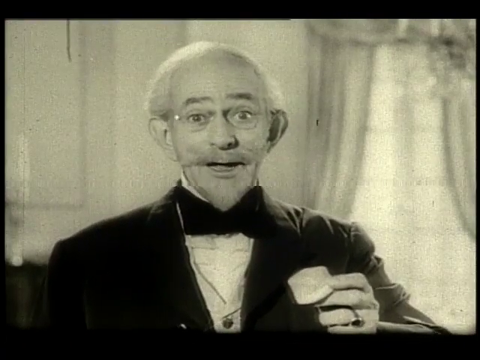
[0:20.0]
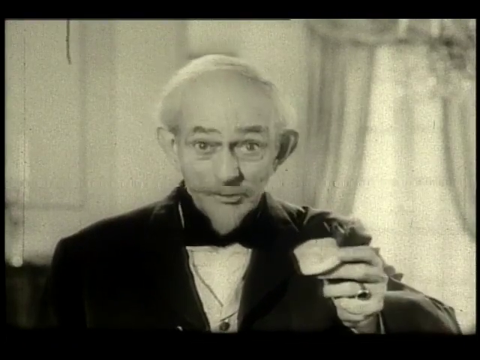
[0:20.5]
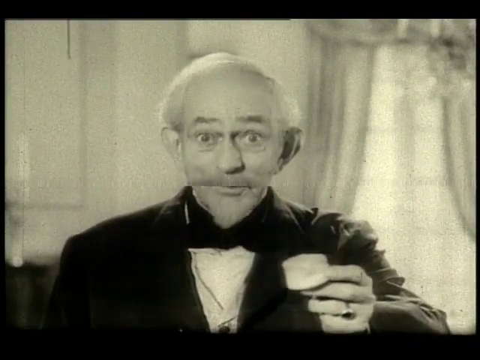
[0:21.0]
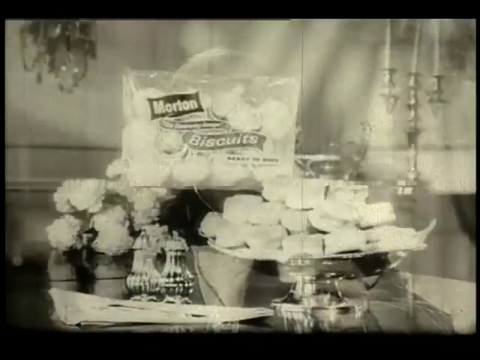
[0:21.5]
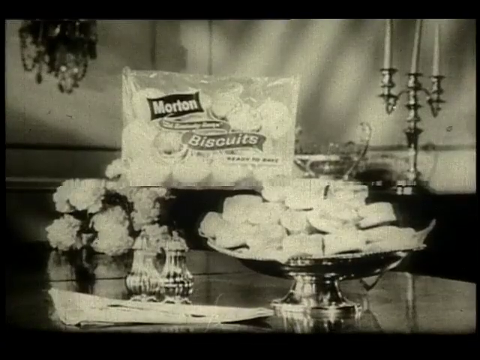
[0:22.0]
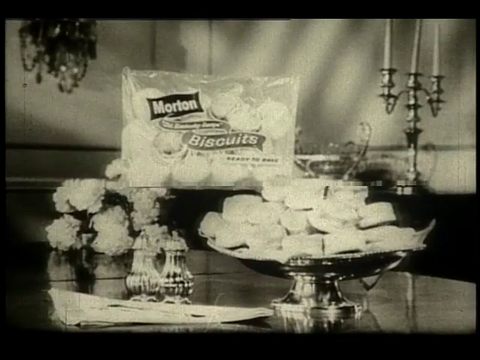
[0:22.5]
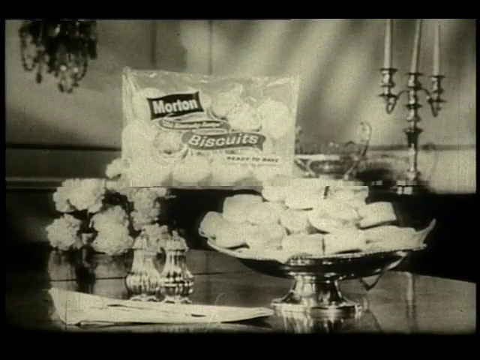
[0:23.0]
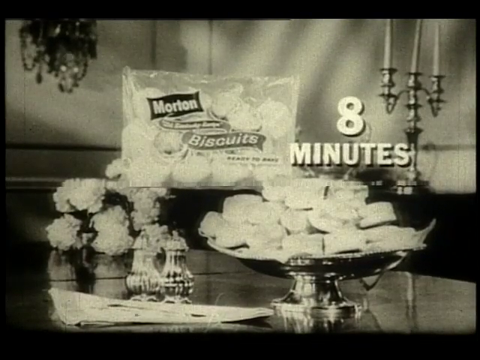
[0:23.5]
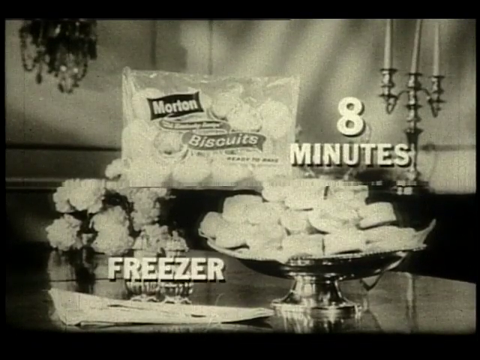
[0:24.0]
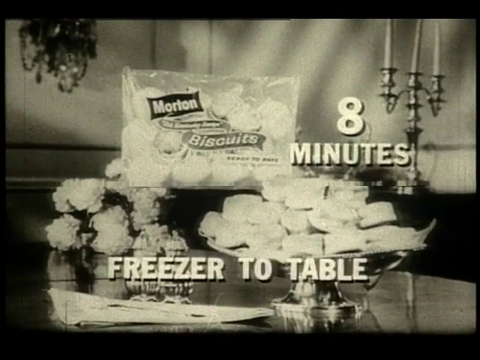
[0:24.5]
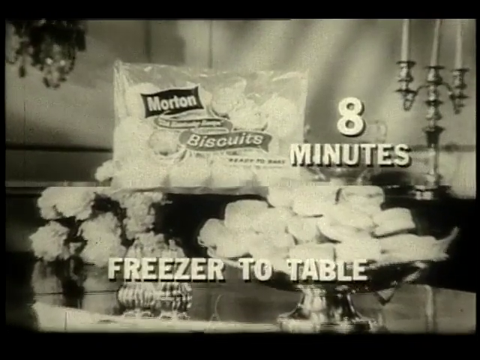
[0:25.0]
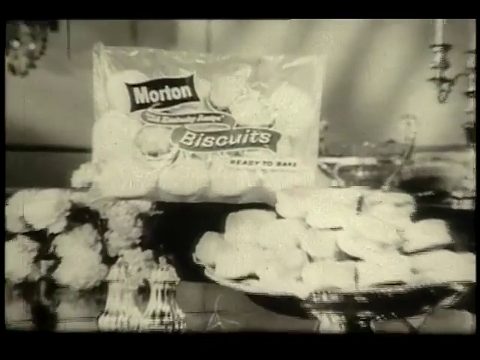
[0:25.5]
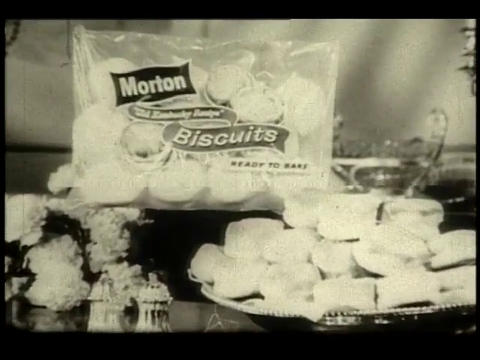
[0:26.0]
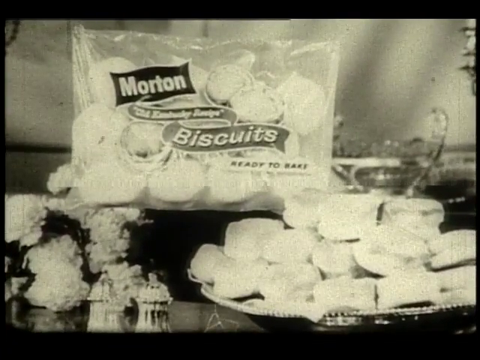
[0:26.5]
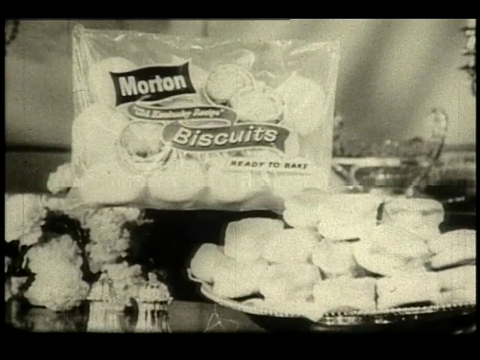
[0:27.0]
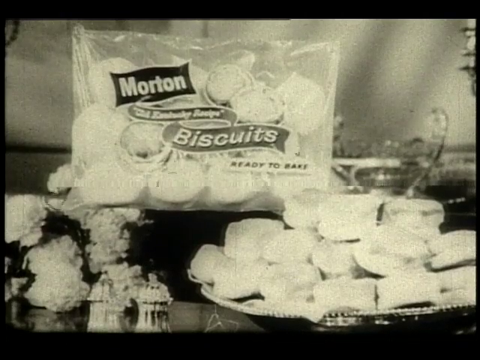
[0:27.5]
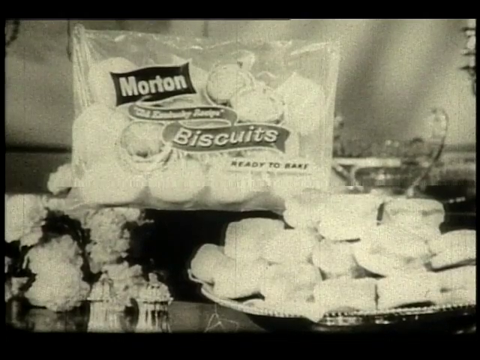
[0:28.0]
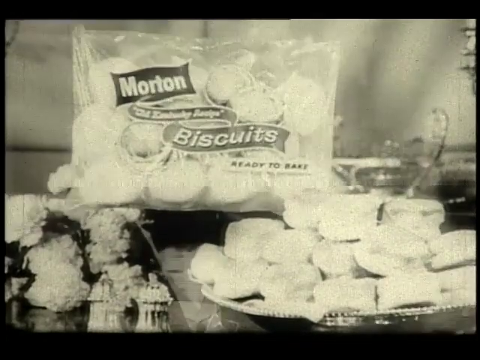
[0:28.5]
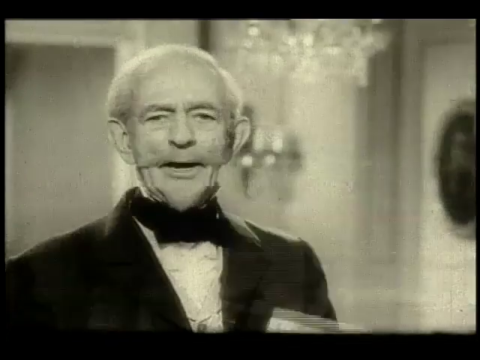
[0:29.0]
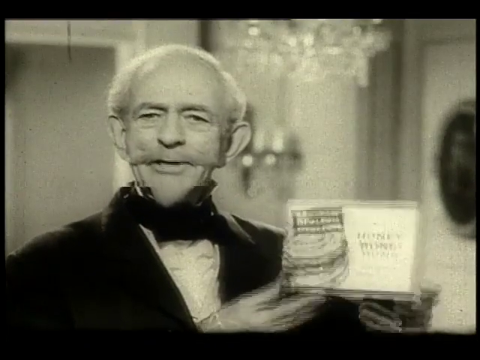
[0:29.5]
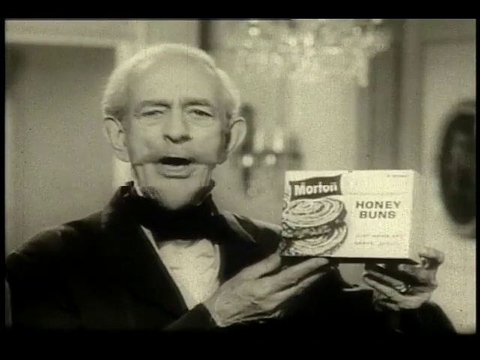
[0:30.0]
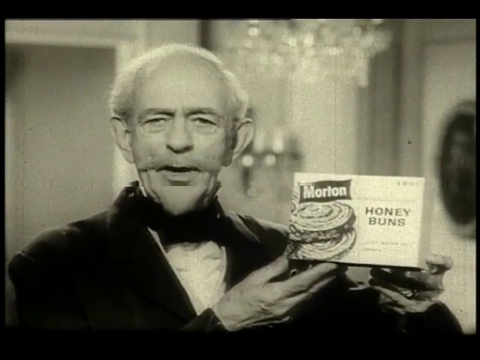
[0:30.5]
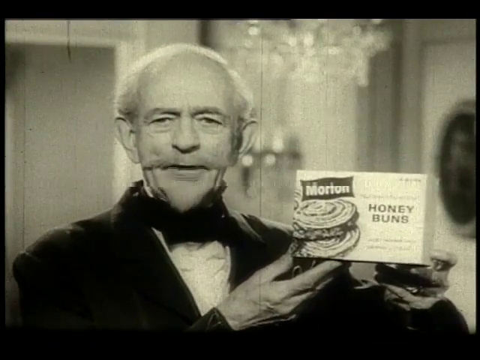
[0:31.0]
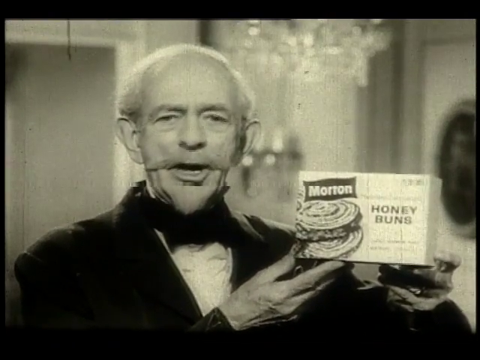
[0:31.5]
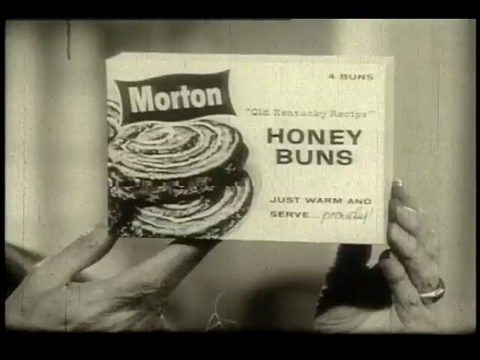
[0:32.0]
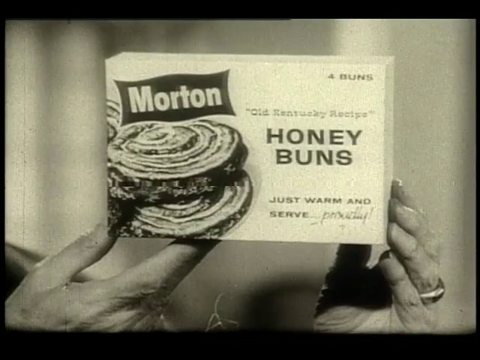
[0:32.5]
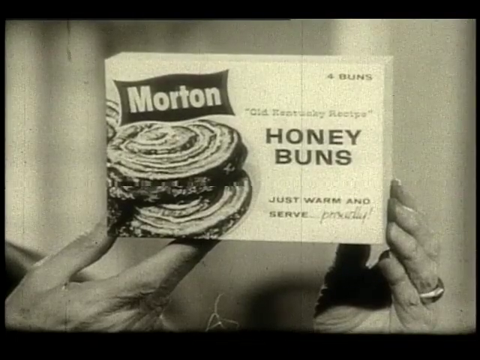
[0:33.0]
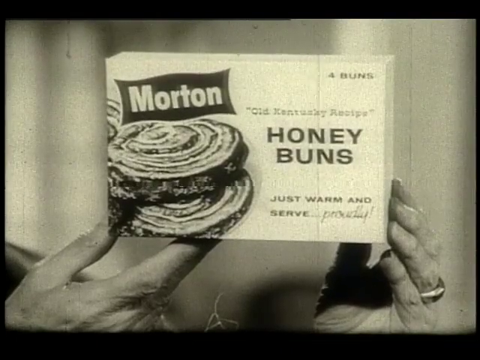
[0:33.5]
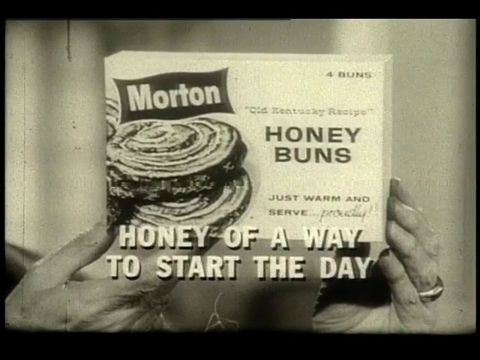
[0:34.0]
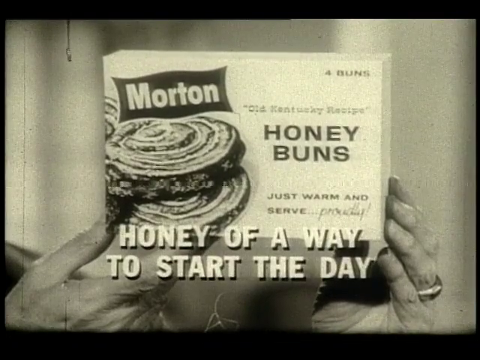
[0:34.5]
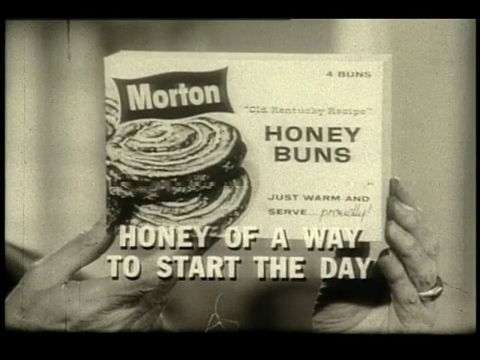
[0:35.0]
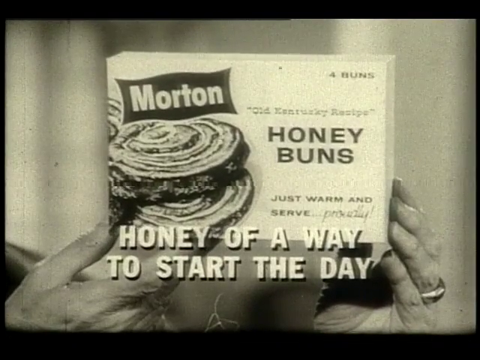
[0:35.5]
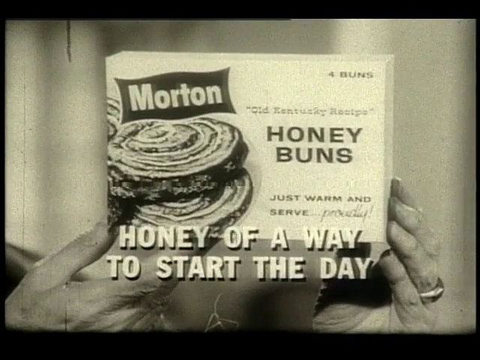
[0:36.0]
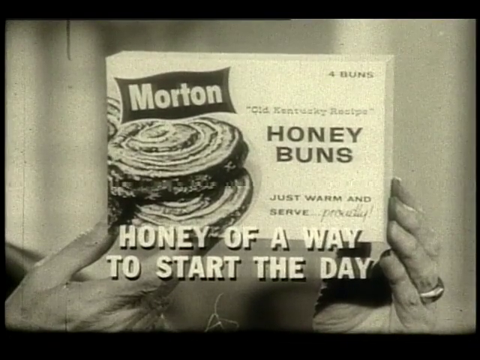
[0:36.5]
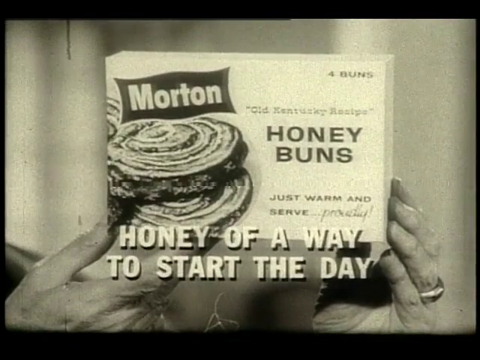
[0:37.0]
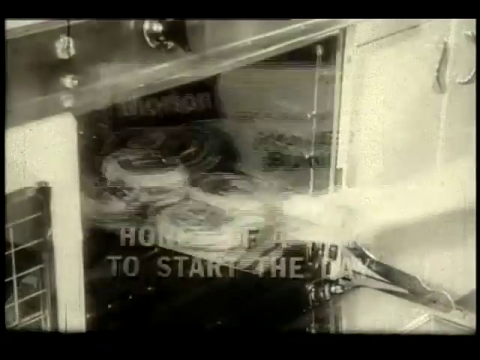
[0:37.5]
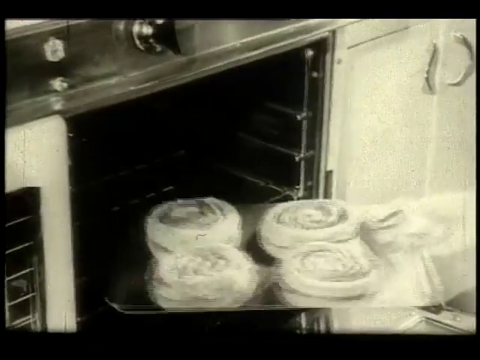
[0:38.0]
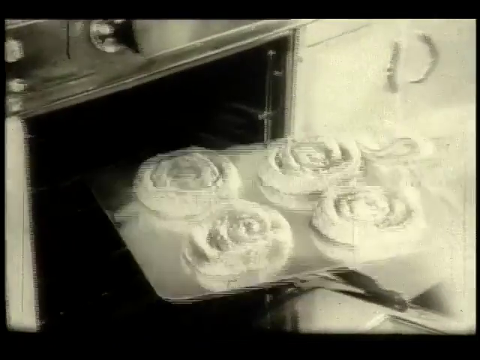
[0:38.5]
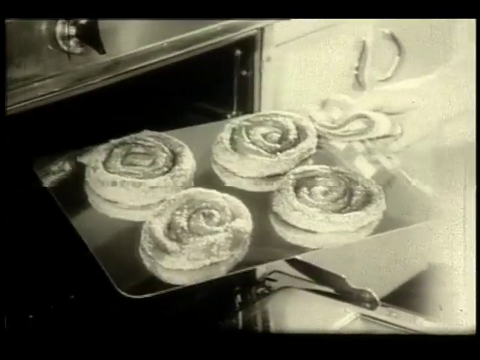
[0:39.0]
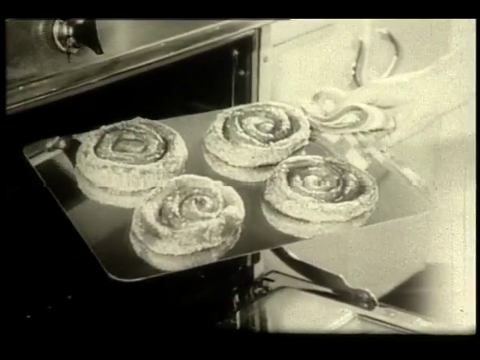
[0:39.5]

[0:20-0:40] The old man in the tuxedo, aged 68 to 70 with short gray hair, continues to hold the biscuit. The video then transitions to a screen that says "Morton Biscuits," "eight minutes" and "freezer to table." A bunch of biscuits are in kind of a silver table platter on an antique-looking table with candles, with the Morton's biscuit box centered in the frame. Another scene follows with the old man, who has a mustache, short gray hair and a tuxedo, holding a Morton's biscuit box in hand that says "Honey Buns" and "Honey of a way to start the day." No other people appear besides the man in the tuxedo. The video transitions between a few different scenes highlighting Morton Biscuits in an old, retro, kind of black-and-white film style.